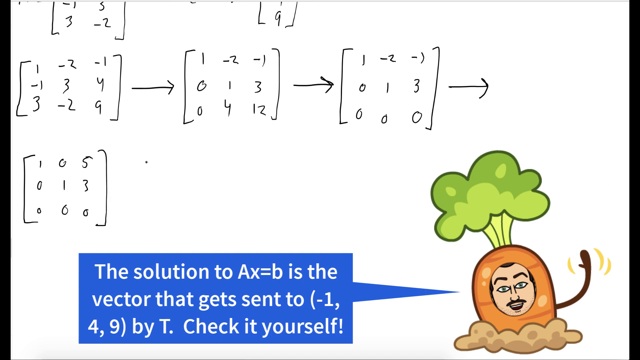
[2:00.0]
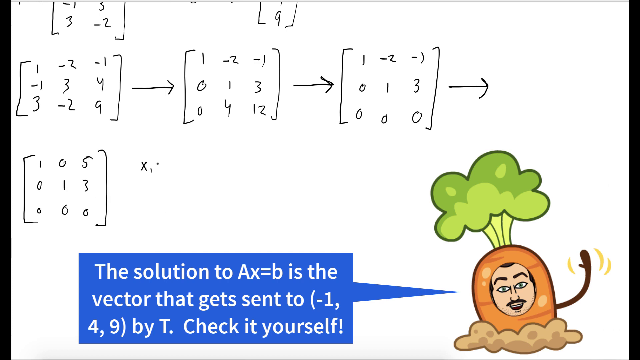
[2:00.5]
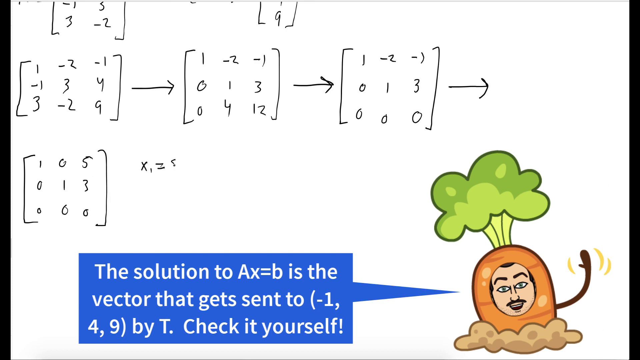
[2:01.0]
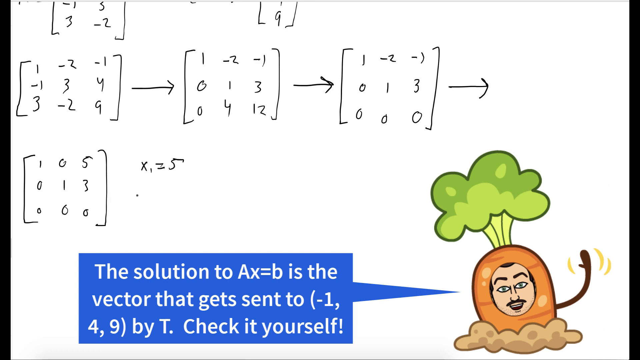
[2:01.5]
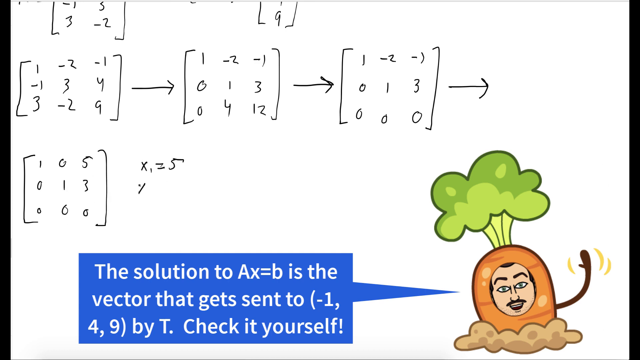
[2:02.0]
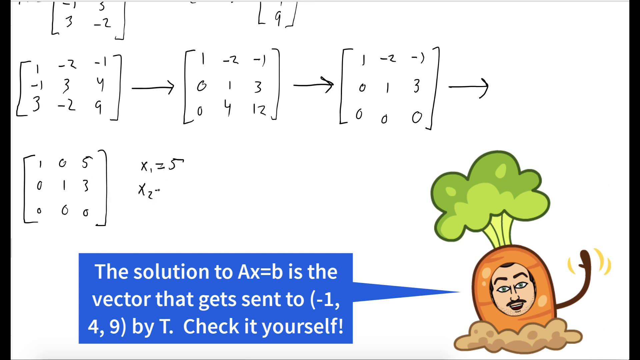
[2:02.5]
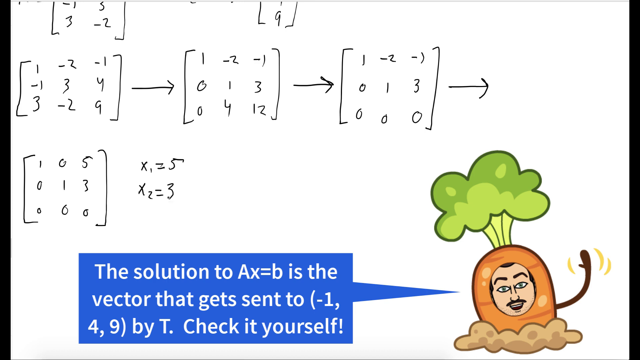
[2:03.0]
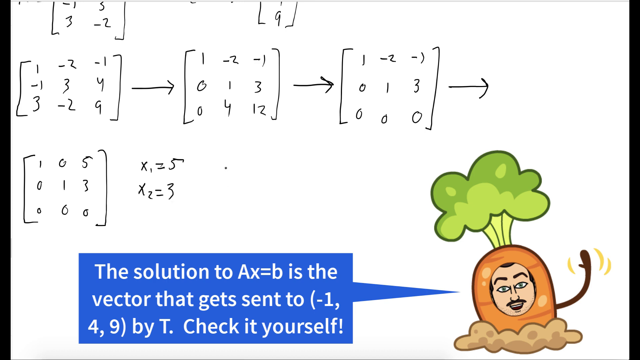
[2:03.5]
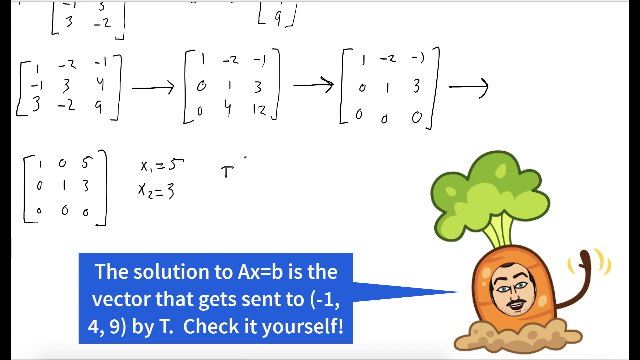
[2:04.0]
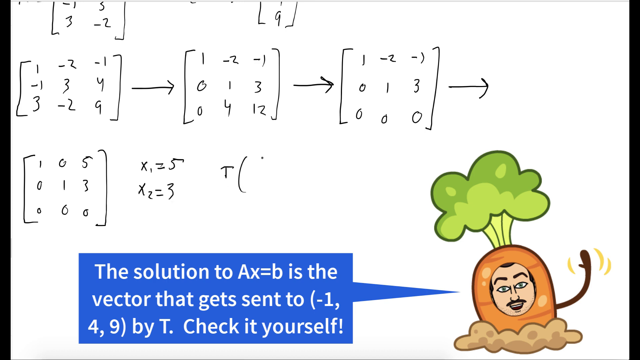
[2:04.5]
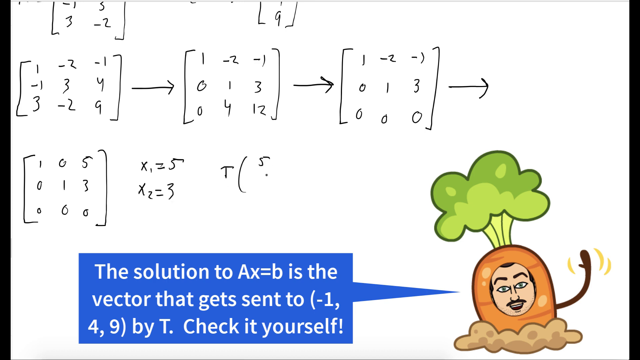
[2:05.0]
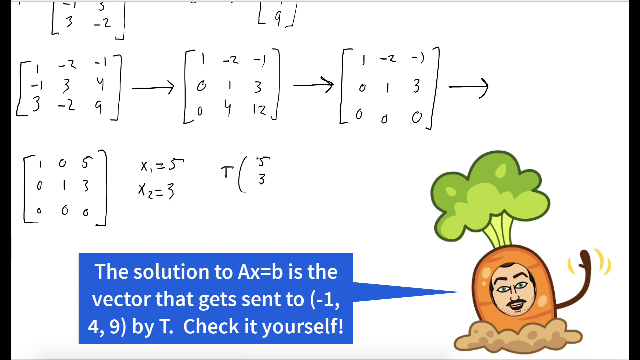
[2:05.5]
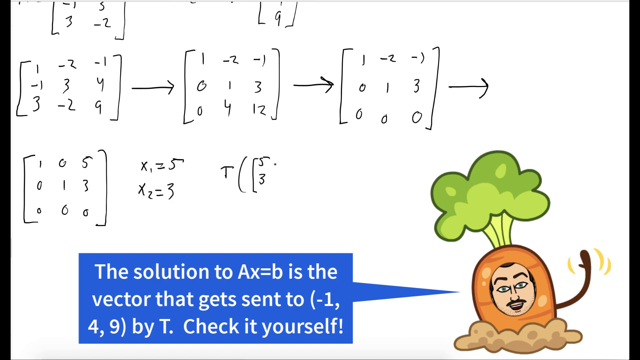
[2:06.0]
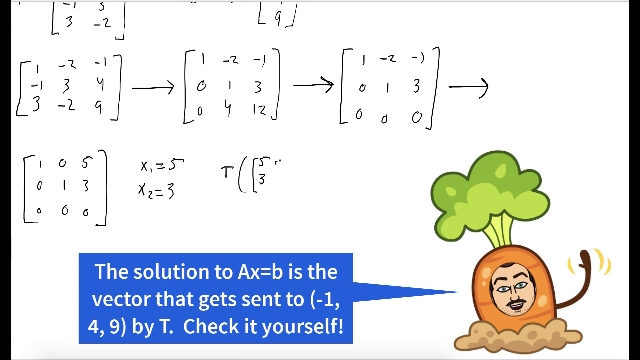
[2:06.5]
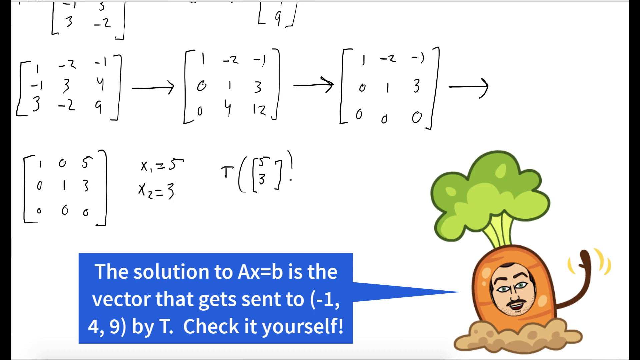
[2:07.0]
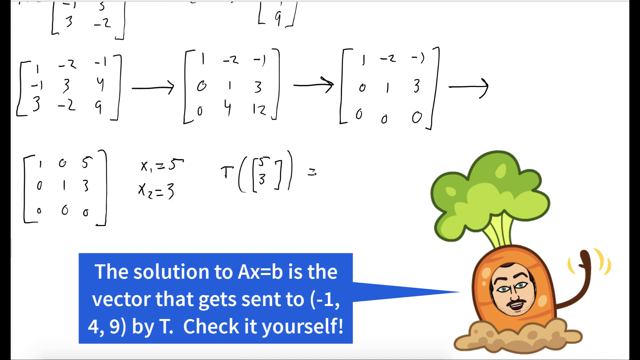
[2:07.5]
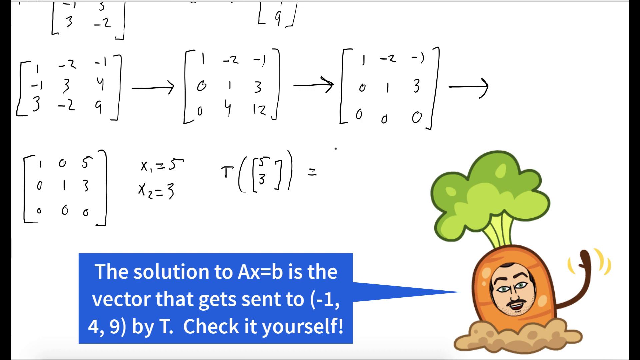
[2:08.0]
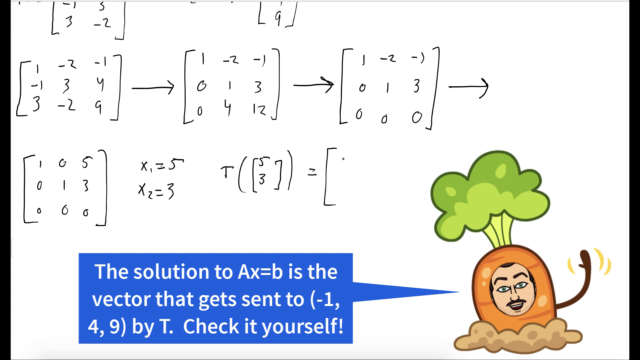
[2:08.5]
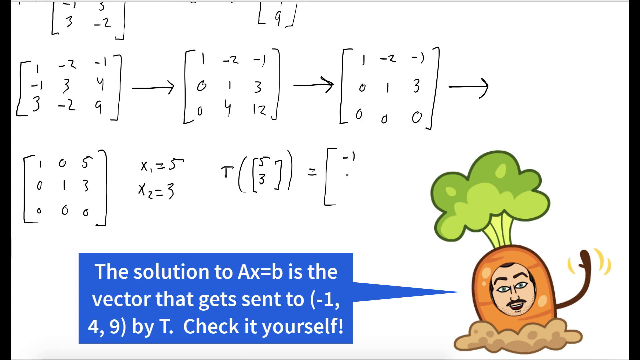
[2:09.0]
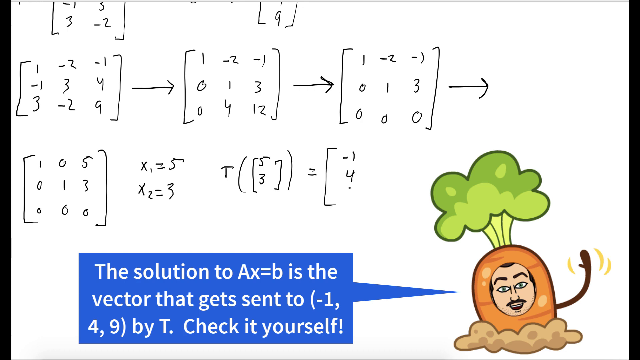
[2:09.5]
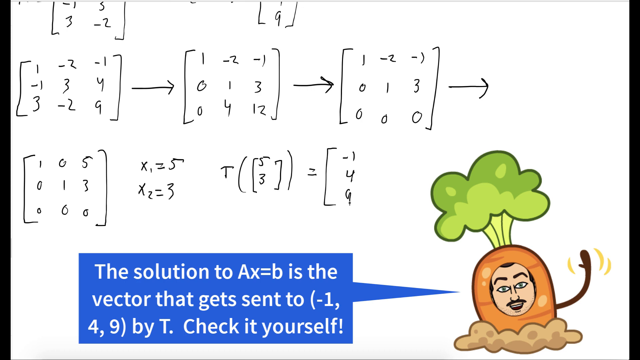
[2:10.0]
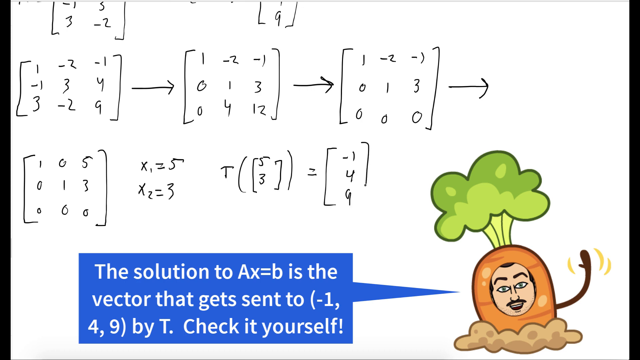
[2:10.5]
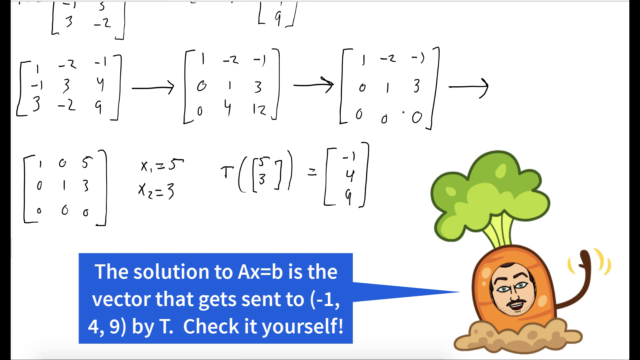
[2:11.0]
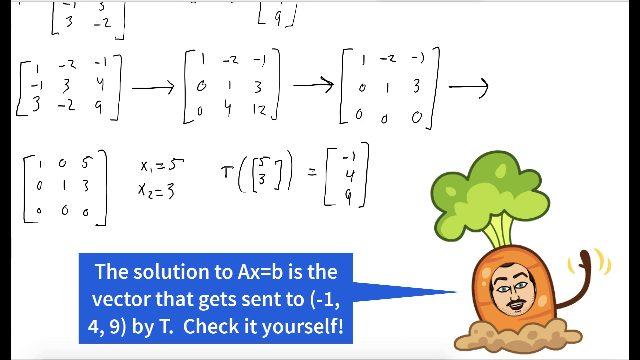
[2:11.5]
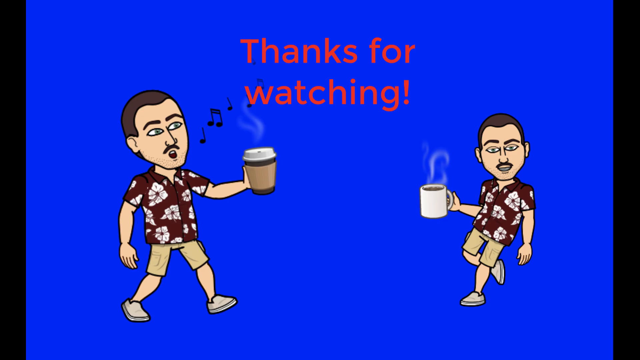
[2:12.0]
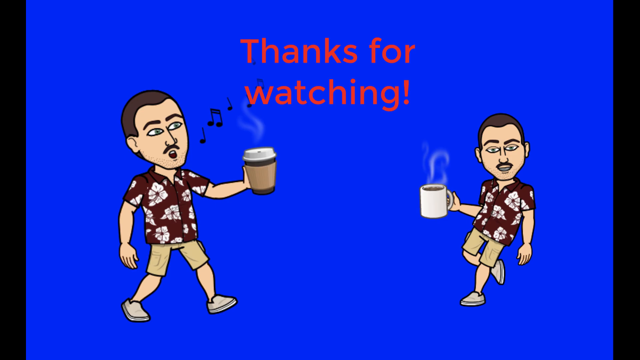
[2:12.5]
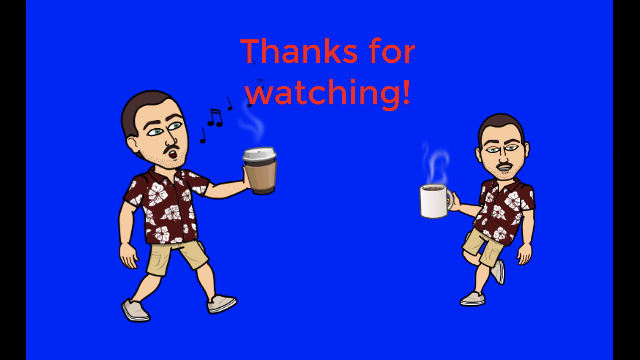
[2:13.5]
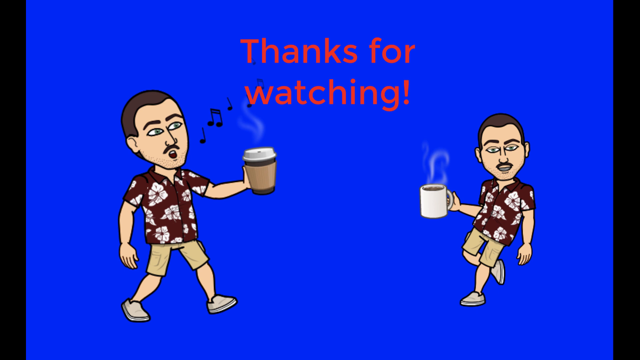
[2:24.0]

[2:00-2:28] He continues reducing, and his cartoon version at the bottom right changes again into a carrot buried underground, waving with its left hand. A blue speech bubble coming from the left reads "the solution to AX equals B is the vector that gets set to negative 149 by T, check it yourself." He keeps solving the problem. Then a blue screen appears with "thanks for watching" in red text at the top, and he is shown with coffee in his hands, wearing a red Hawaiian shirt that stands out more here.